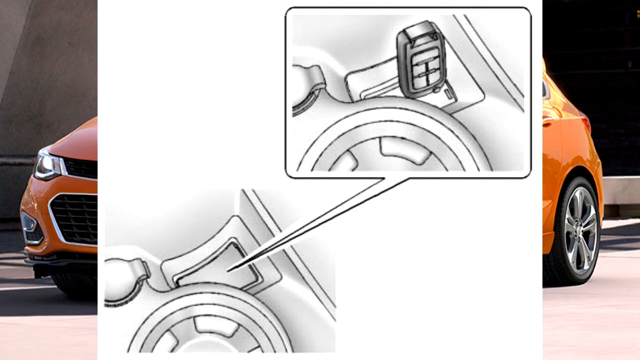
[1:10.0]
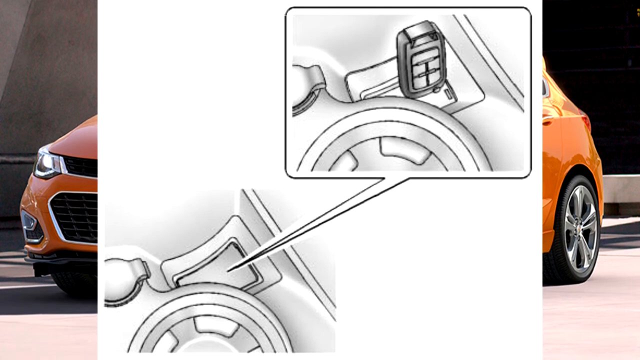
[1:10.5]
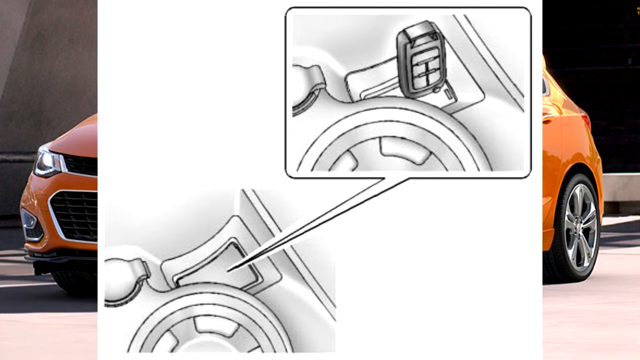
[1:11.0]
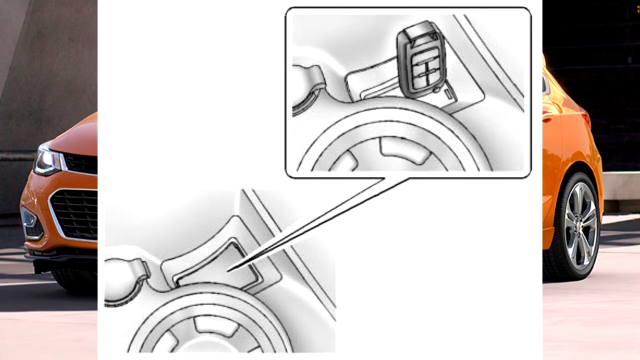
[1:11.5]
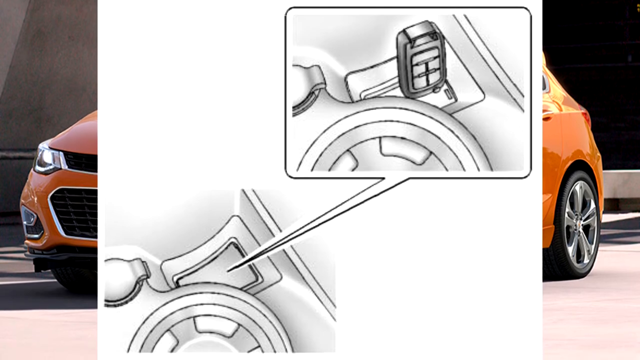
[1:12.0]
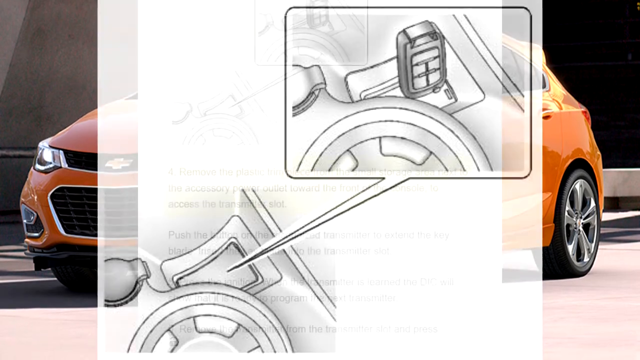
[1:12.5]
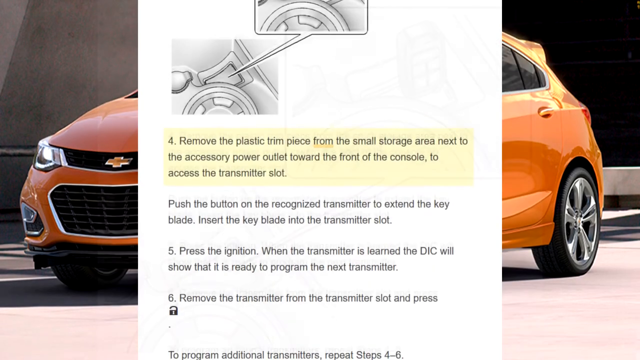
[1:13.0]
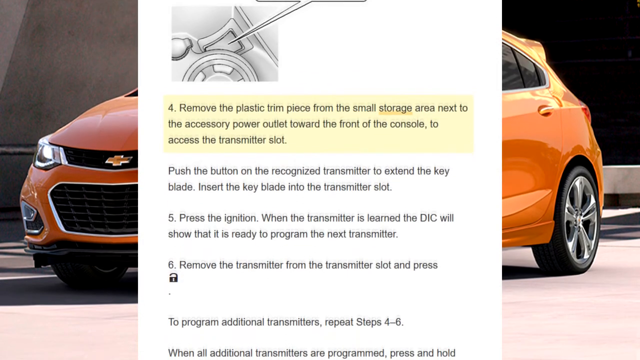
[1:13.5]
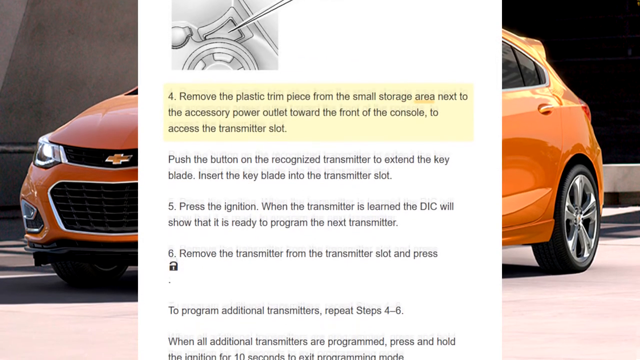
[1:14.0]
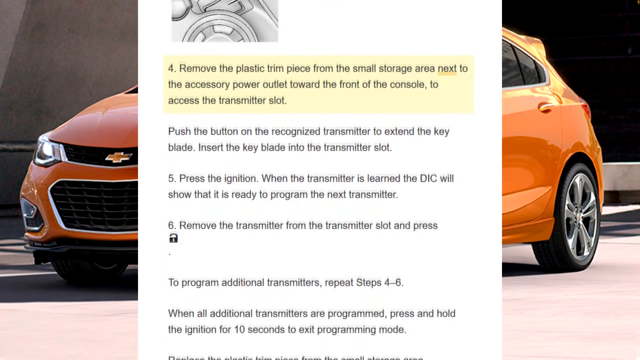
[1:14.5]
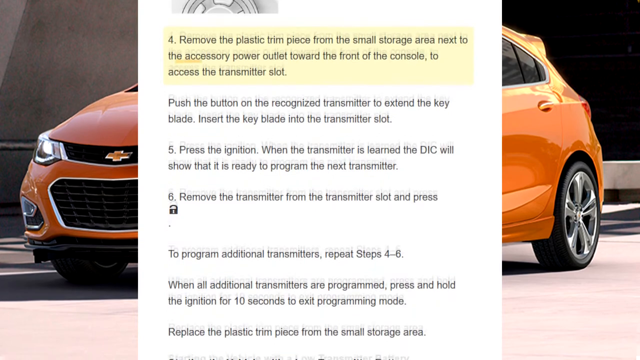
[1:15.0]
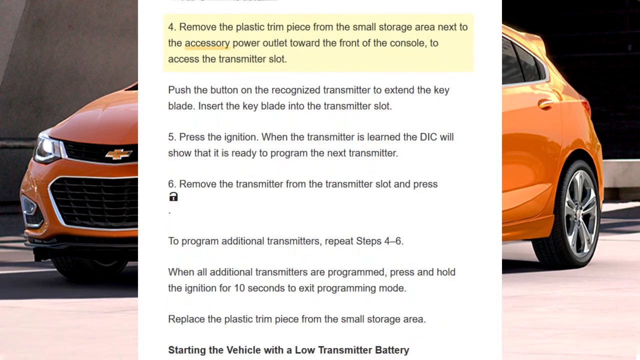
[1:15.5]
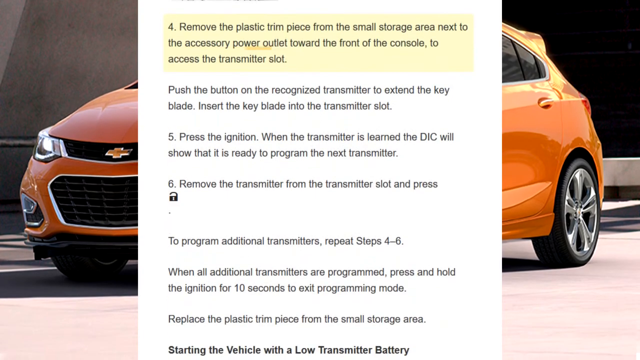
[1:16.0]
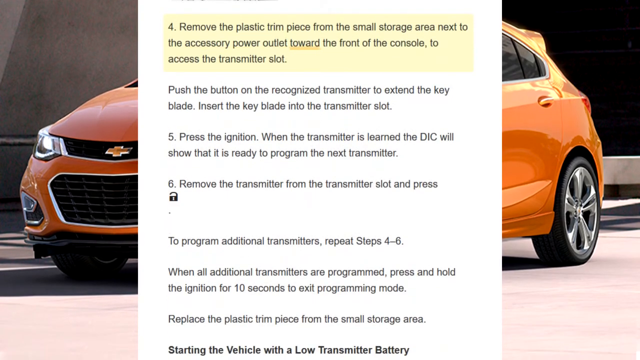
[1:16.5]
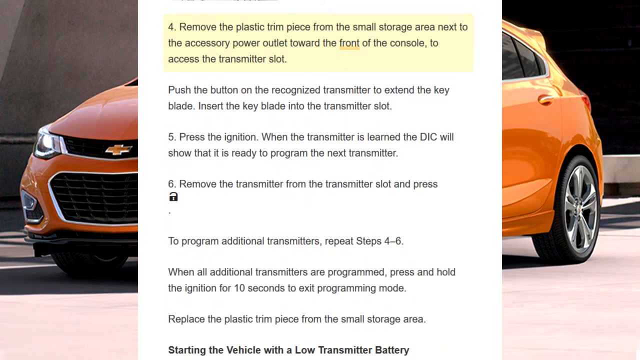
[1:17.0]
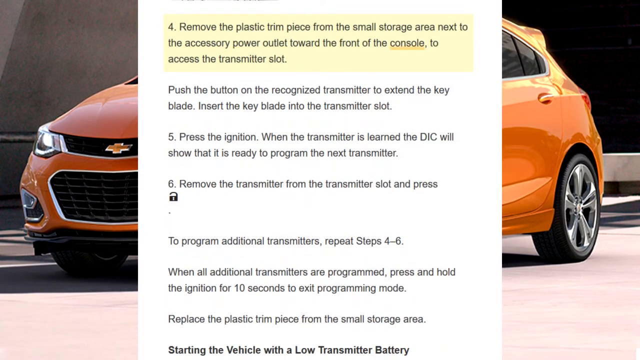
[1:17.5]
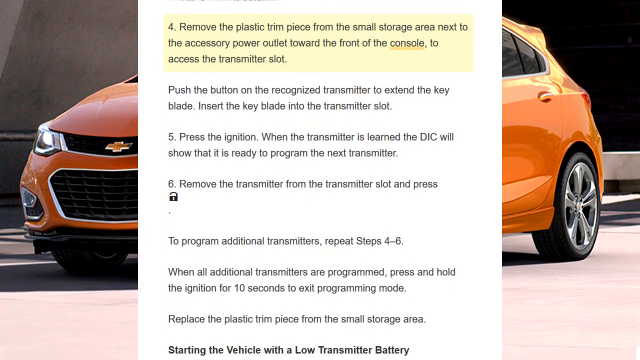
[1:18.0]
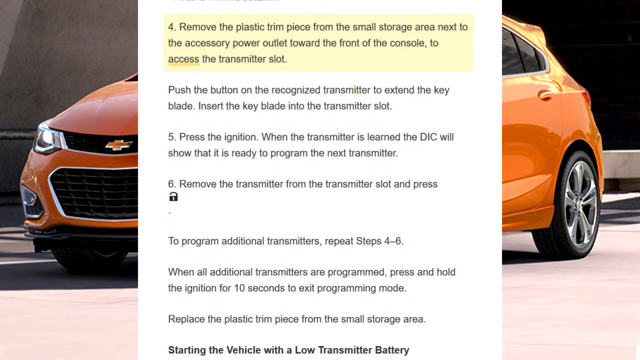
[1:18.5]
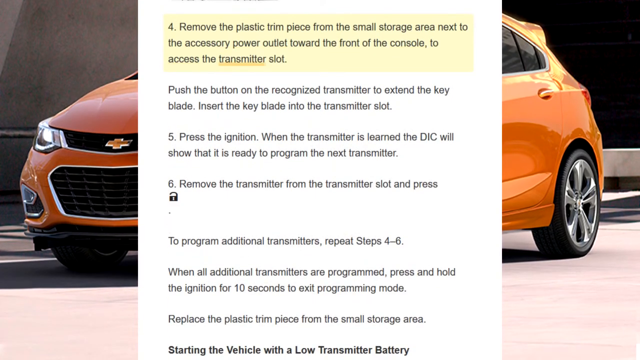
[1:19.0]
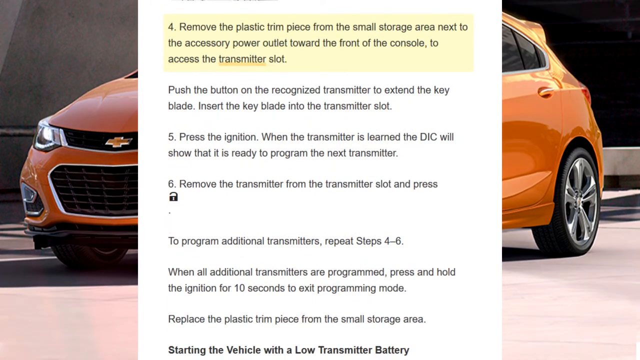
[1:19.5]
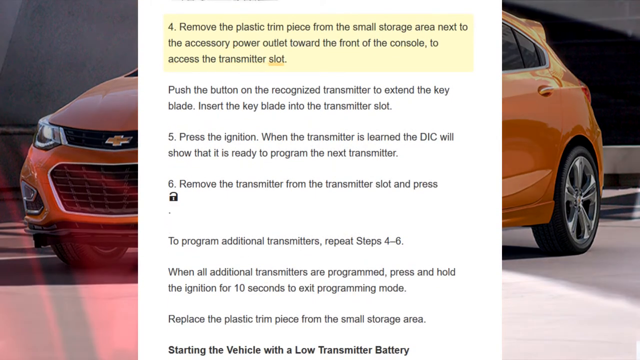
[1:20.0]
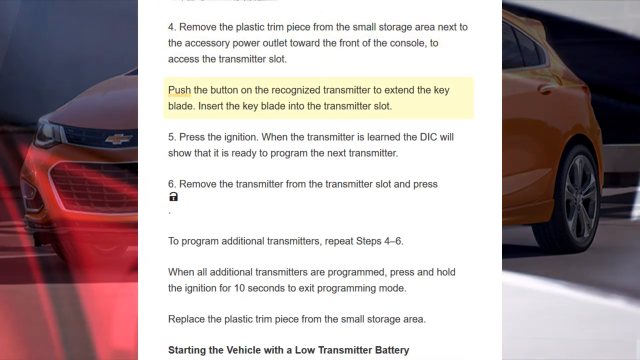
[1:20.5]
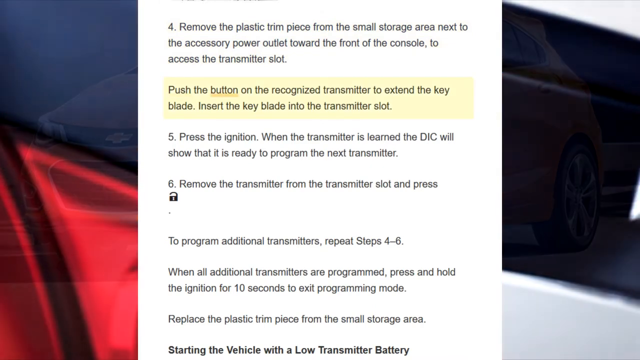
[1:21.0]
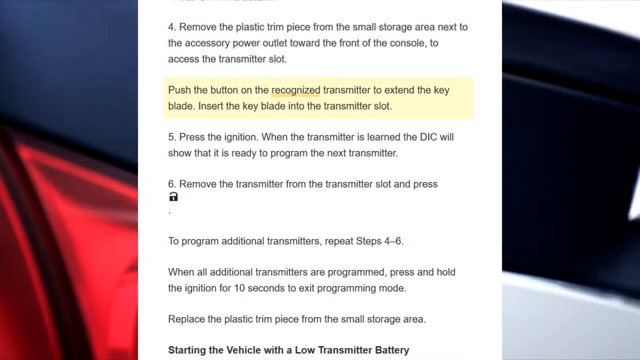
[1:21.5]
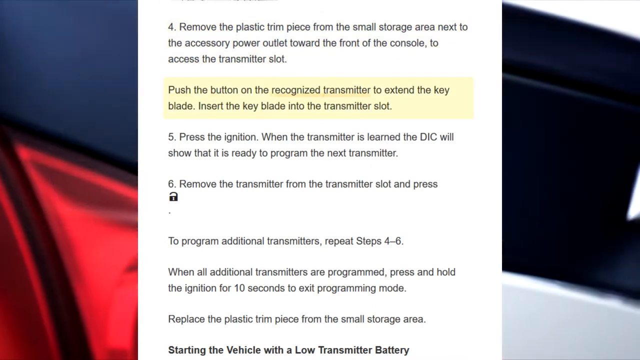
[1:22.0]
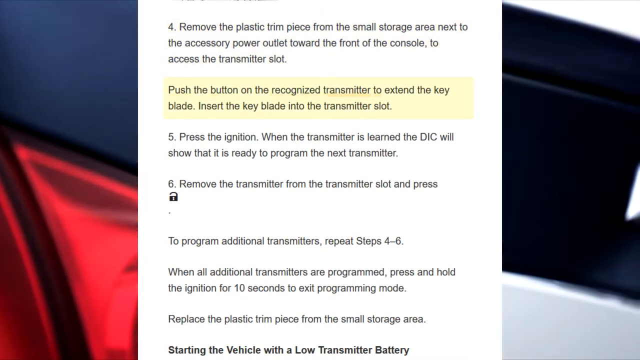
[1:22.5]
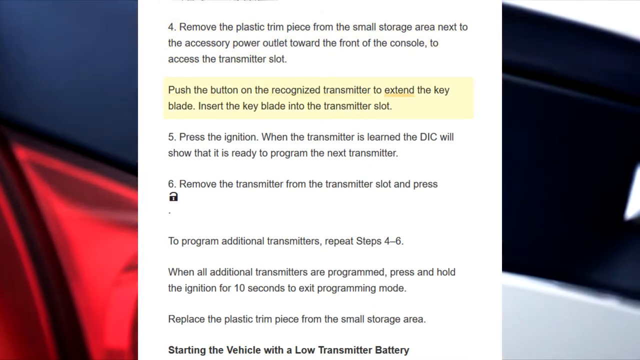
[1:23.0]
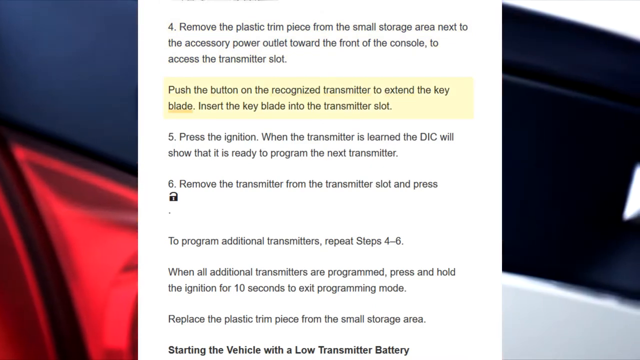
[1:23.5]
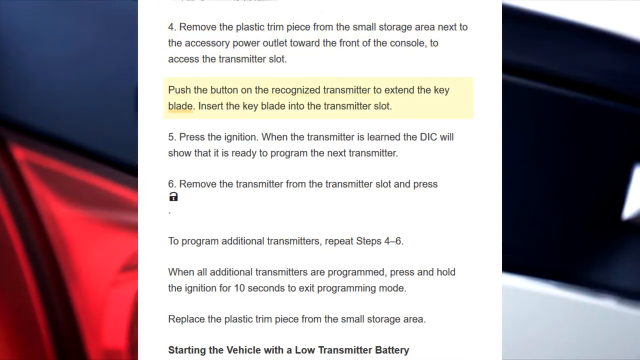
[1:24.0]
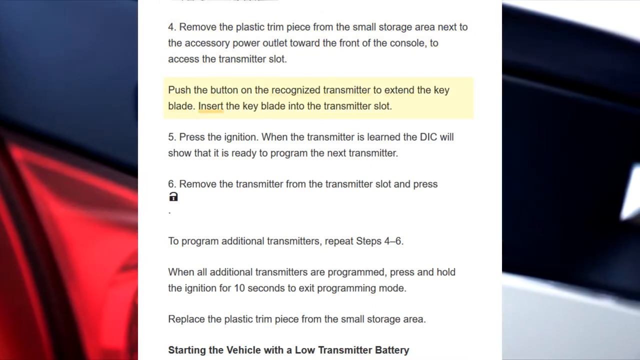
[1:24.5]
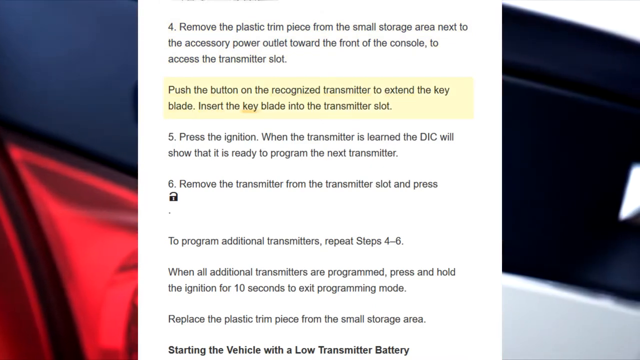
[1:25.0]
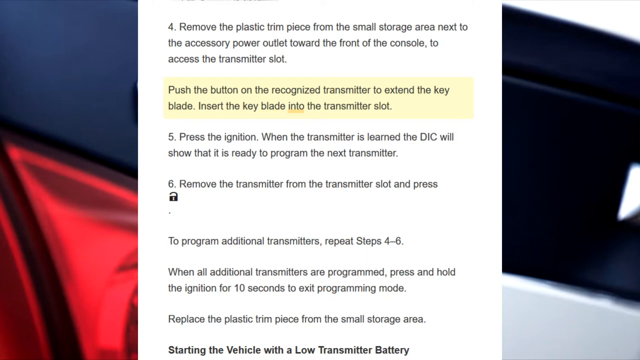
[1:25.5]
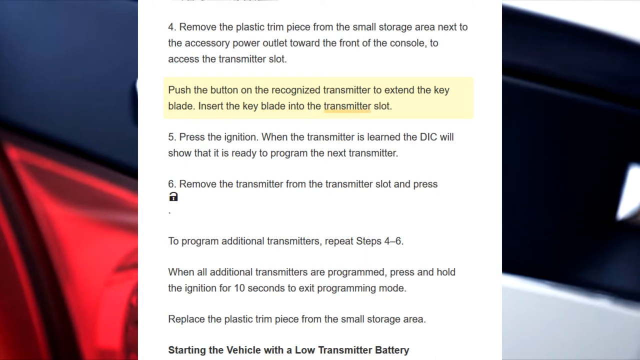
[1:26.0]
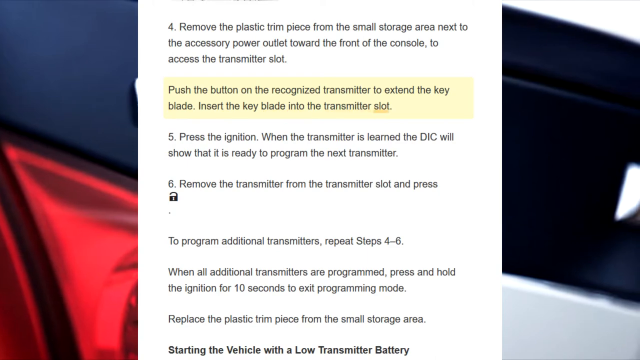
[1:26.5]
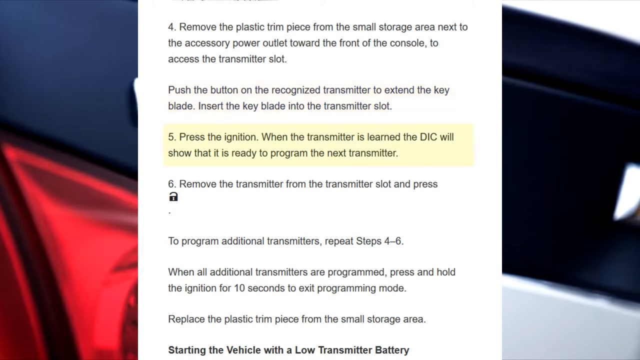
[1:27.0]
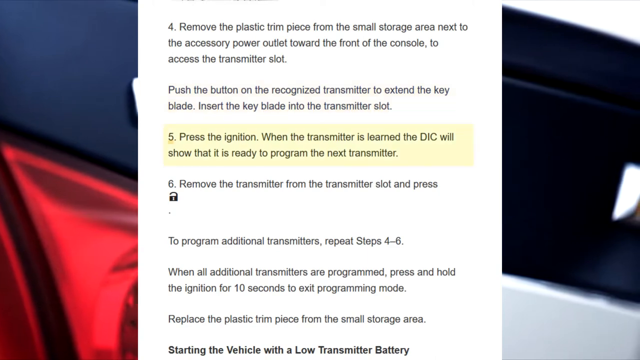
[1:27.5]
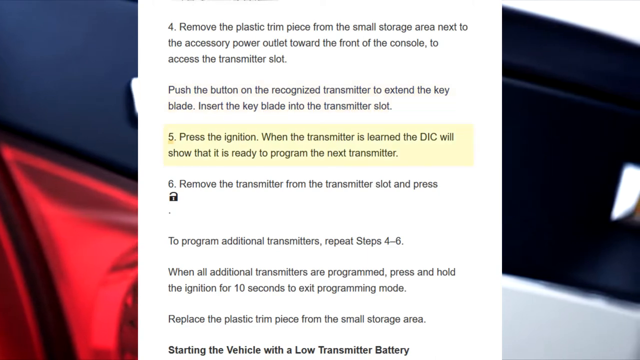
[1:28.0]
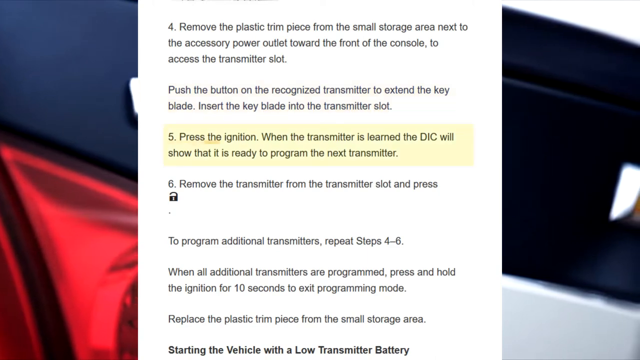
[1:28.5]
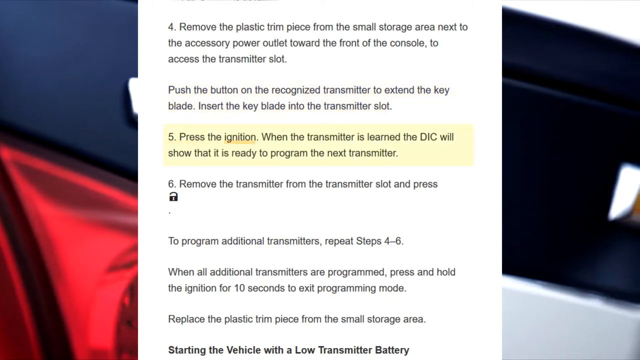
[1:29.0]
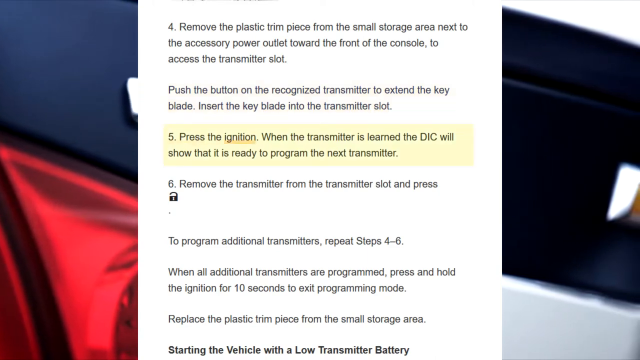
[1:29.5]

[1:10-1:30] The view keeps very slowly panning down with the orange car as the backdrop, then returns to the wide picture of the paper. The next paragraph is highlighted and its words start being underlined; scrolling down, this one is numbered four. The background then switches to a super close-up: red in the bottom left corner reaching about halfway up, blue metal up the right and left sides, something square and black on the right with a little white above it and to its right, and a small triangle at about the midway point. The highlight moves to the next paragraph, which is only two lines long, and underlines it, then to the next one down, which begins with a five, highlighting and underlining it. Paragraph four says "remove the plastic trim piece from the small storage area next to the accessory power outlet toward the front of the console to access the transmitter slot." The next one says "push the button on the recognized transmitter to extend the key blade, insert the key blade into the transmitter slot." The highlighted paragraph five says "press the ignition when the transmitter is learned. The DIC will show that it is ready to program the next transmitter."